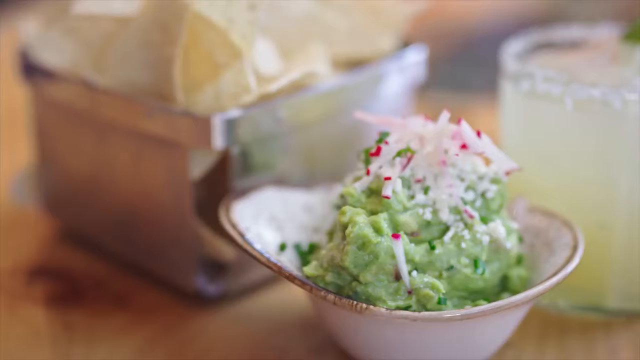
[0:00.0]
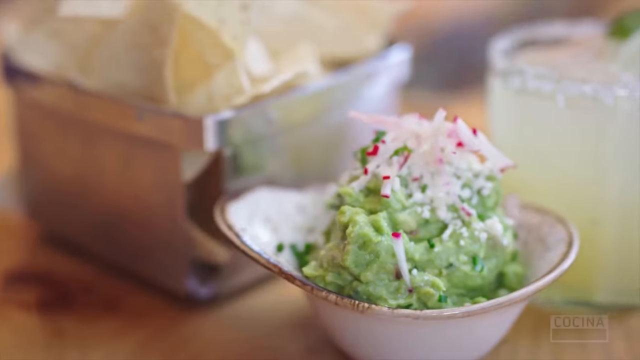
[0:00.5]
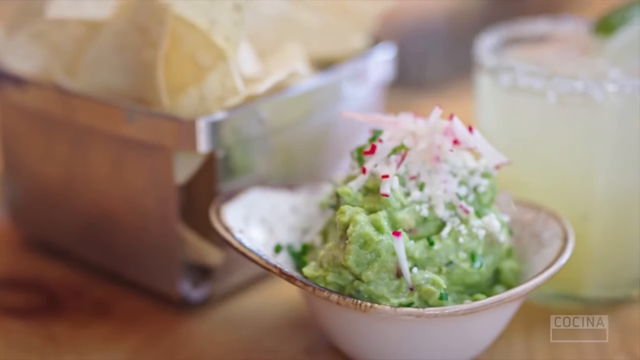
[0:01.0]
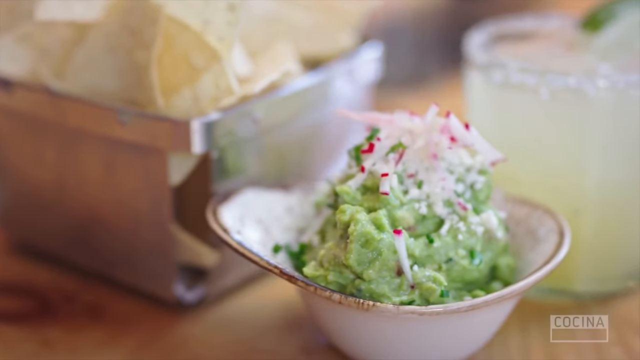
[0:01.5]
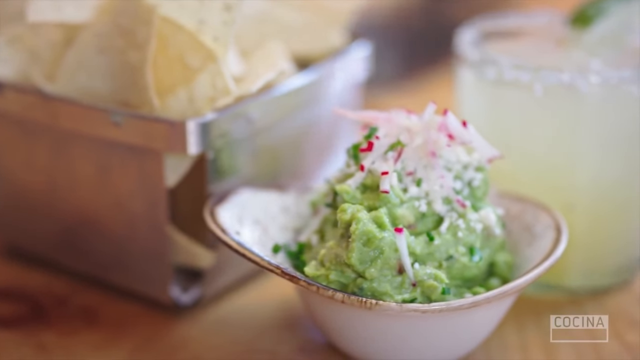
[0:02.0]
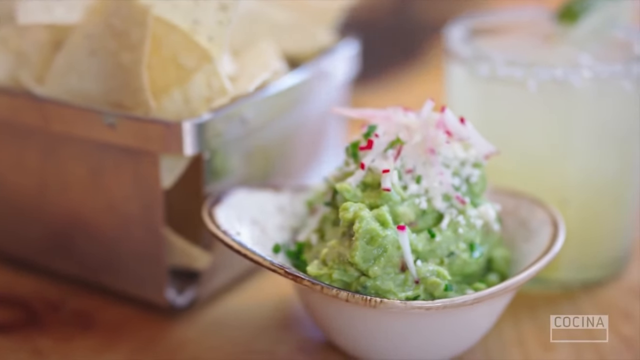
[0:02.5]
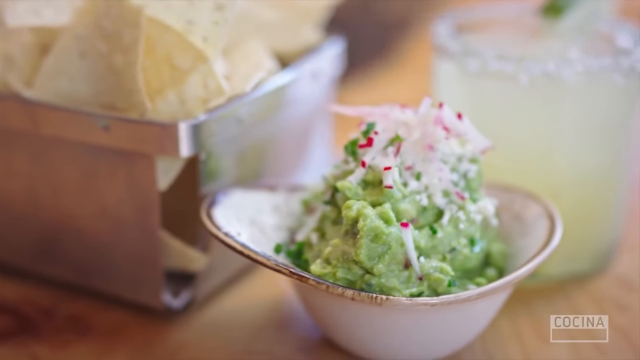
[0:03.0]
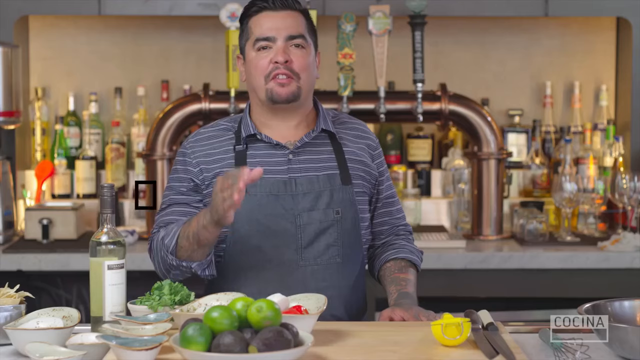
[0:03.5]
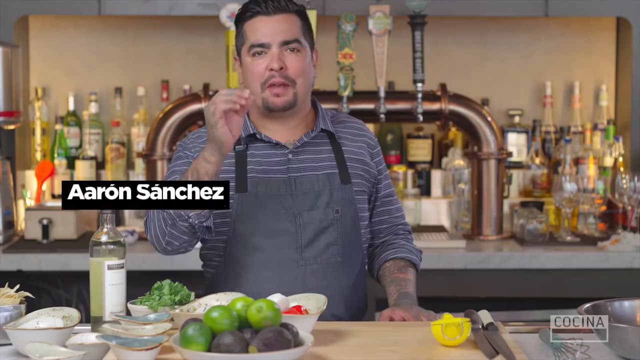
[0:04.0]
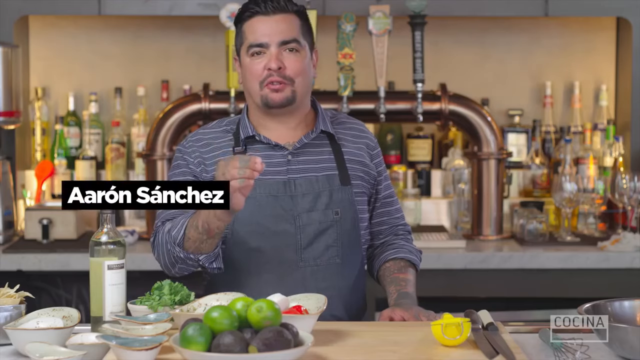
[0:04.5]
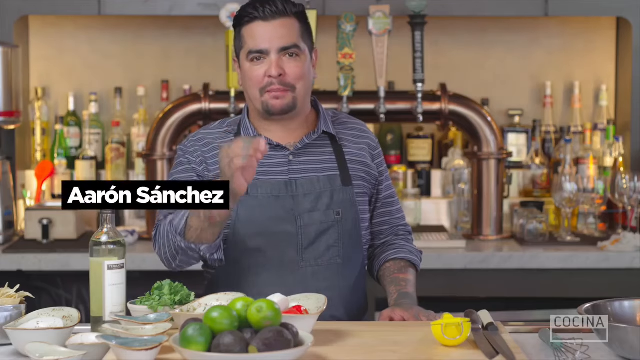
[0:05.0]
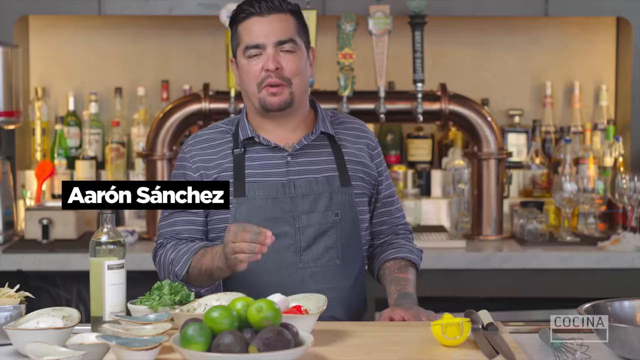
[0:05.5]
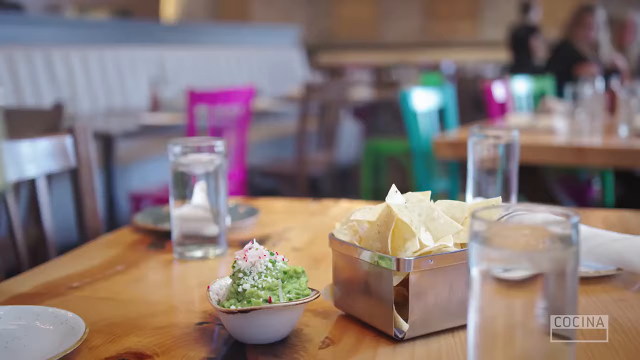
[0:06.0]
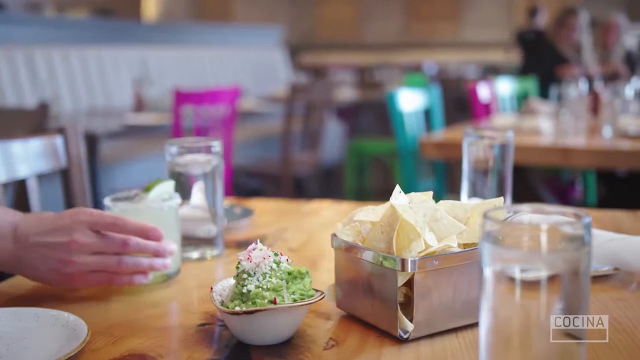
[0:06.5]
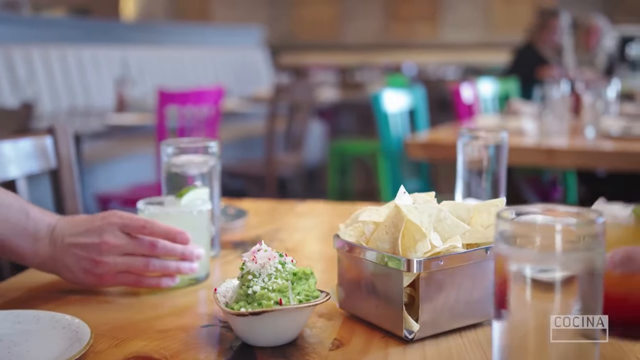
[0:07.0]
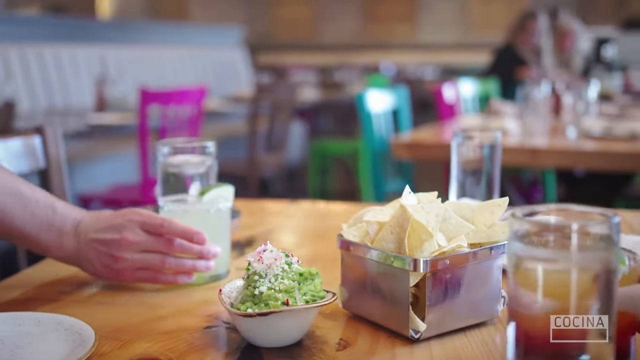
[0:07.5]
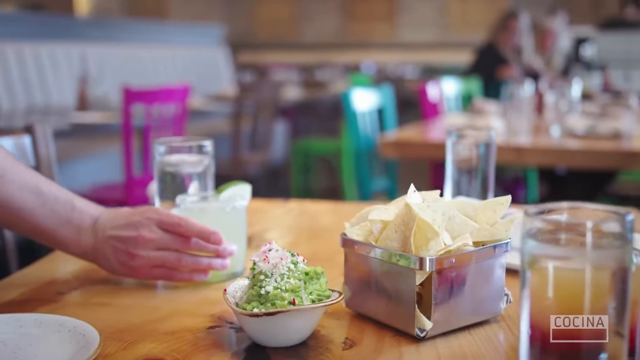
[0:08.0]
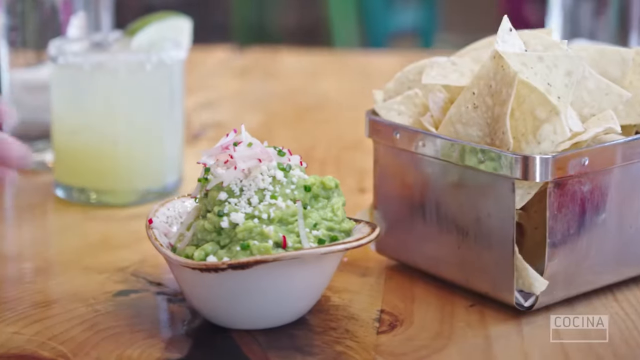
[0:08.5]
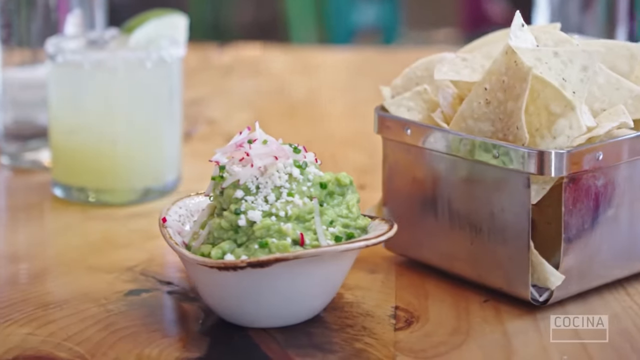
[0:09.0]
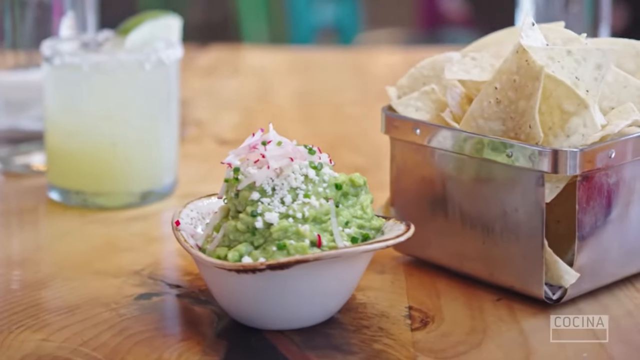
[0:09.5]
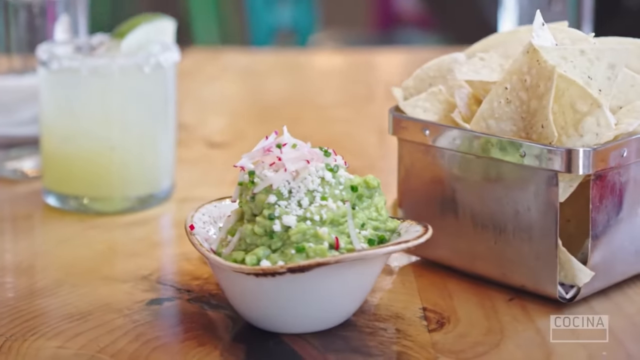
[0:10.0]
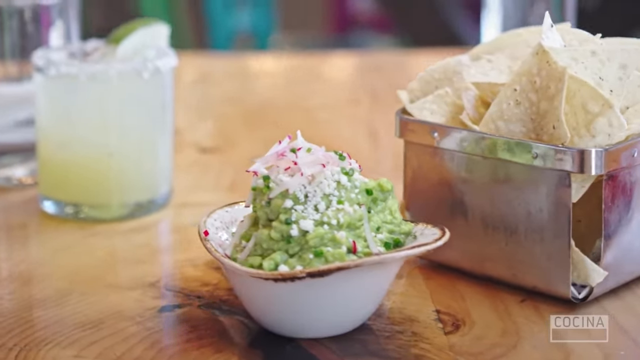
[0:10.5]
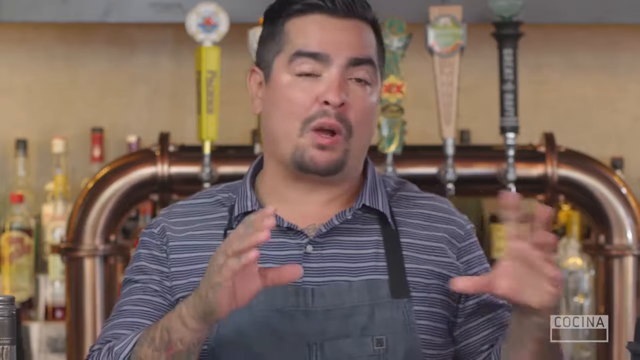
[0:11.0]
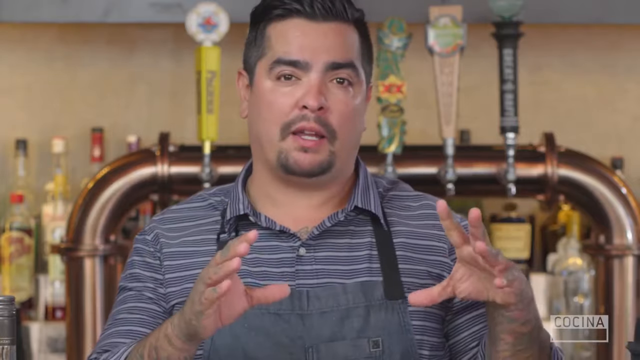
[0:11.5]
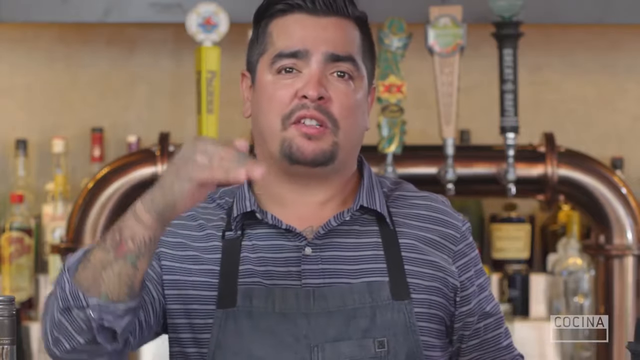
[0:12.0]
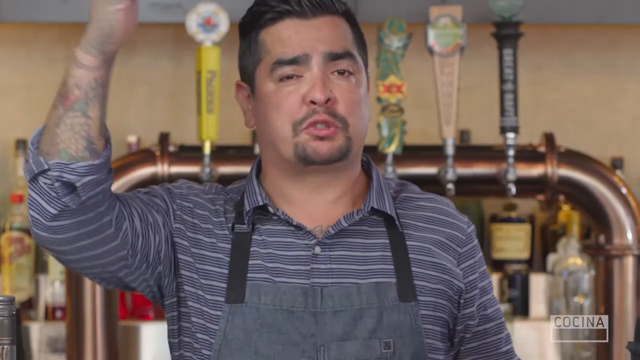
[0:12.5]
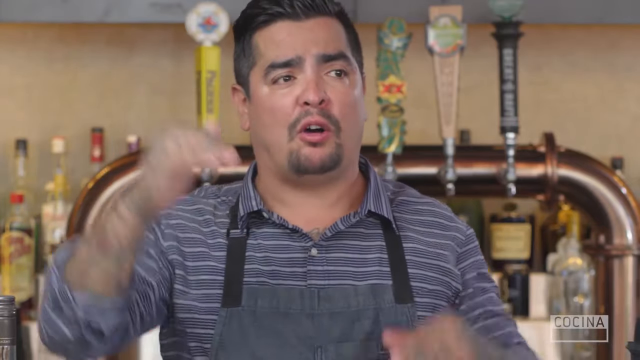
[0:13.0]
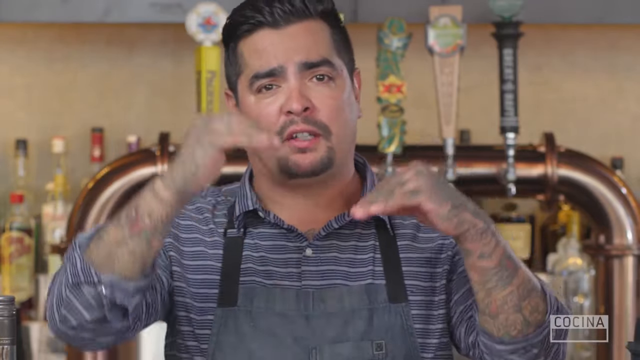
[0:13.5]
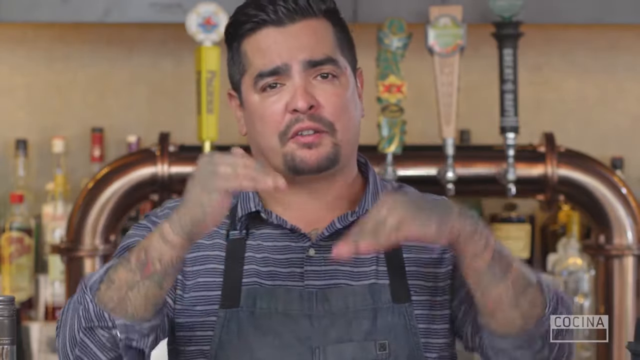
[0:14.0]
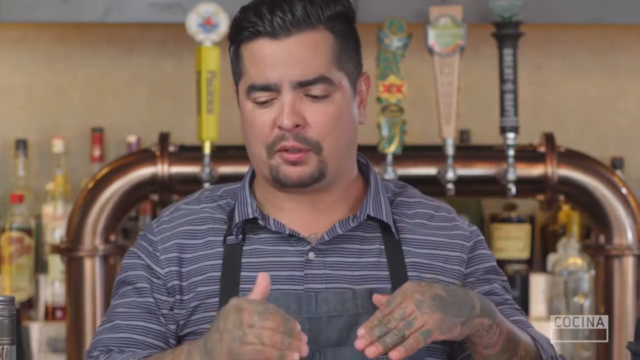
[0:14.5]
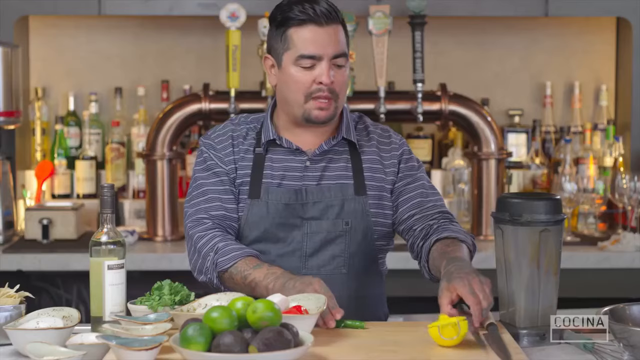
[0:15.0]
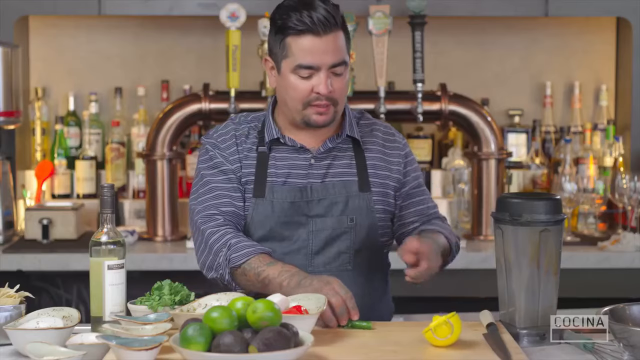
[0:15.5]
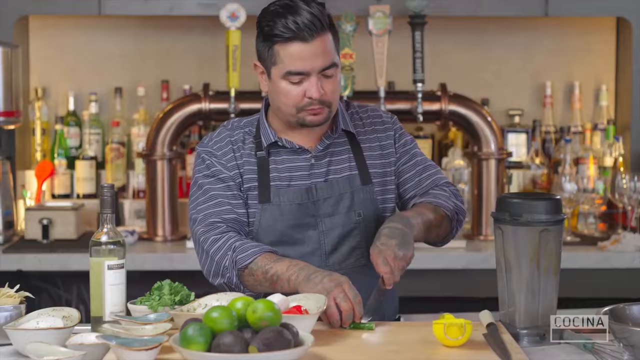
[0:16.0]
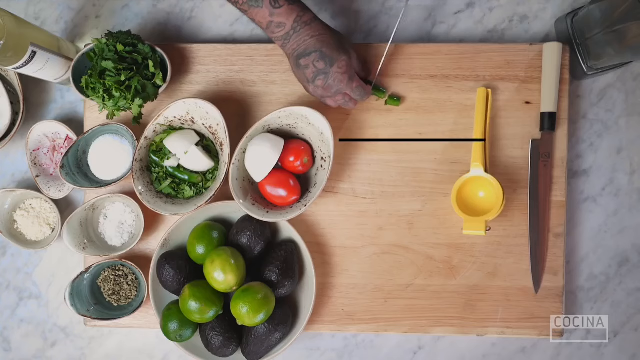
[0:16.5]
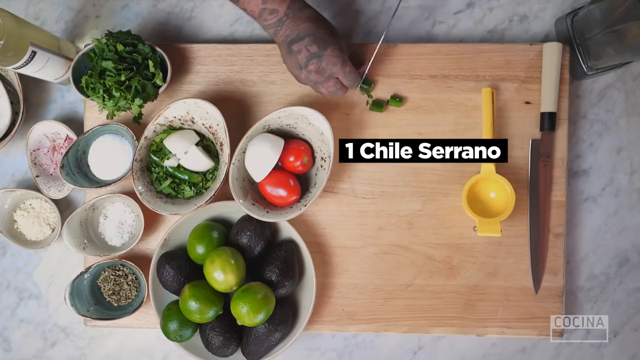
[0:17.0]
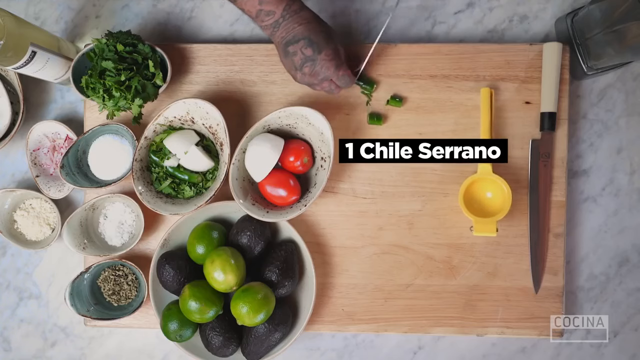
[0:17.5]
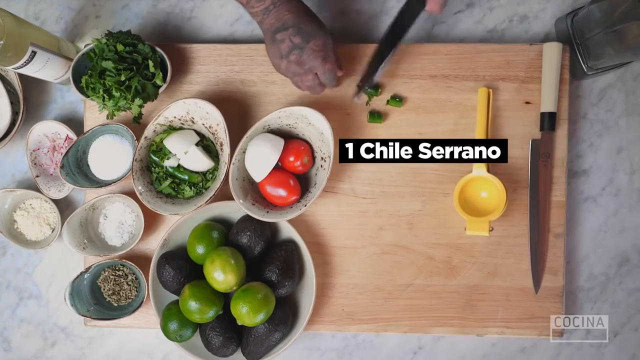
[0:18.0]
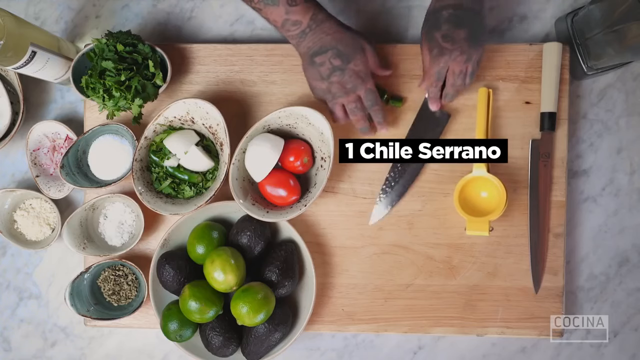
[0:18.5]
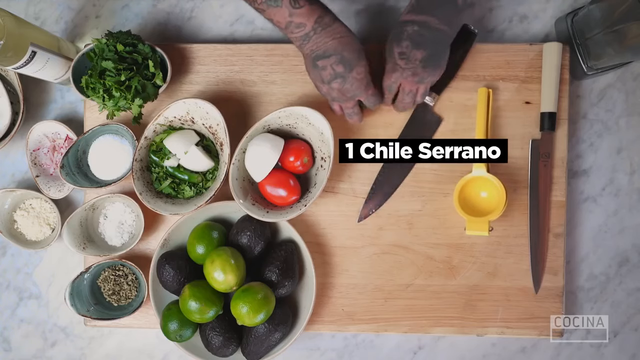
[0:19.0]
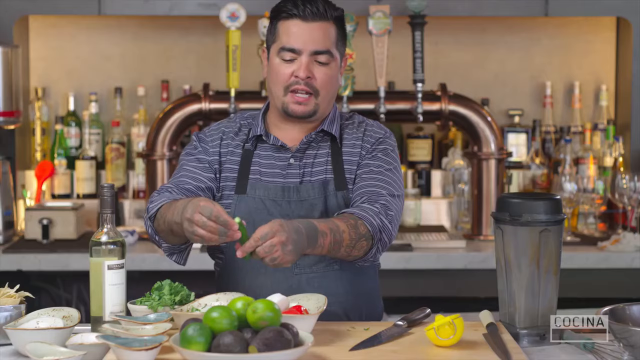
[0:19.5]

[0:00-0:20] The video opens on what looks like avocado guacamole in a small white bowl, topped with what looks like a white relish. The scene transitions to a man who looks Mexican, with a beard, a mustache and short hair; he looks a little chubby and wears a blue and white striped shirt with an apron over it. A black rectangle appears with the name "Aaron Sanchez" in white over it, identifying the cook. He talks and moves his right hand. The scene changes to the guacamole in the middle, with tortilla chips in a rectangular silver bowl, three glasses of water and what looks like a margarita with a lime on it, and the view goes around the guacamole. The man appears again, talking and gesturing with his left and right hands as if showing levels up and down. With a chopping board in front of him, he starts chopping a green chili, and white text reads "one chili serrano". In a top-down view, many ingredients in bowls are on the left side: powders, including white powders, limes, avocados, tomatoes and what looks like coriander.